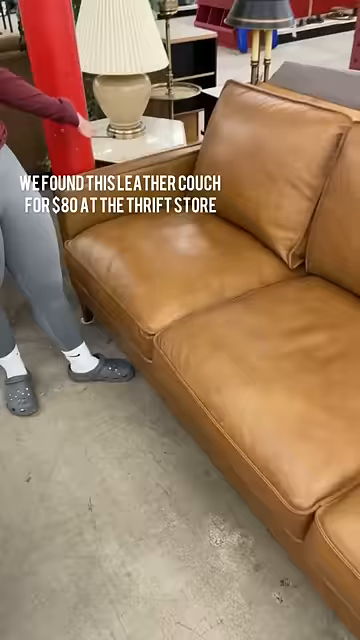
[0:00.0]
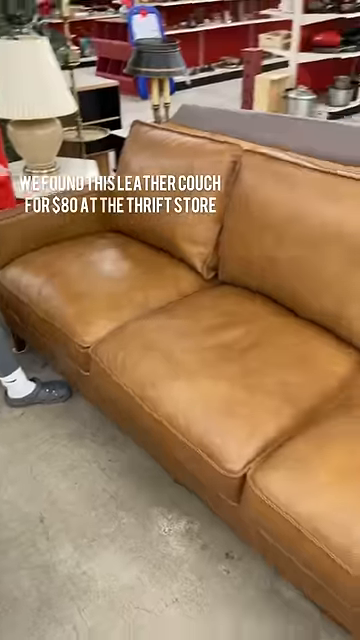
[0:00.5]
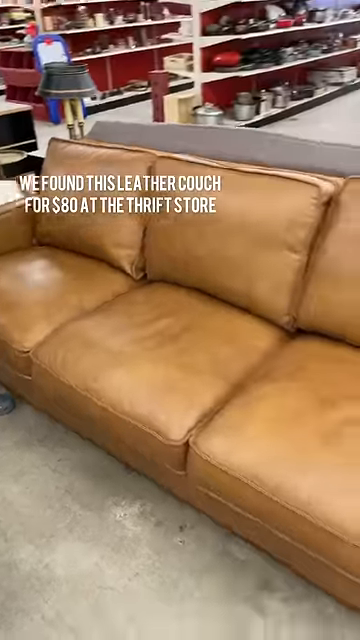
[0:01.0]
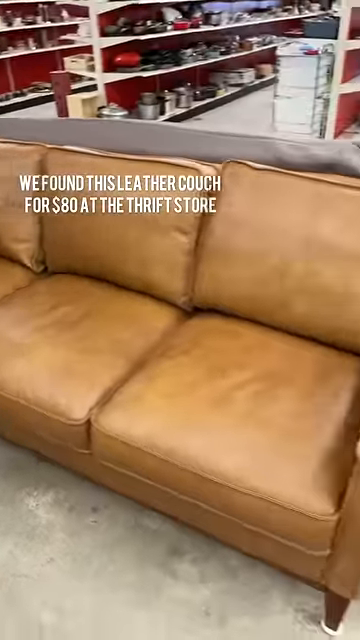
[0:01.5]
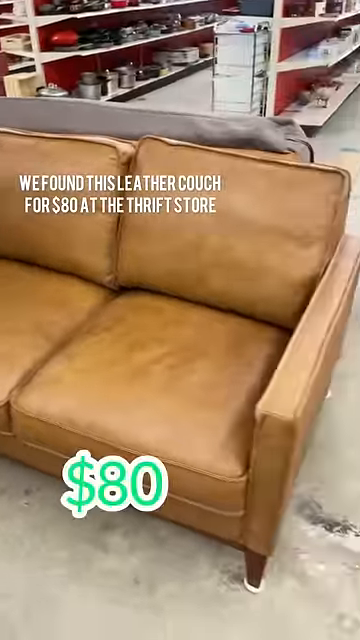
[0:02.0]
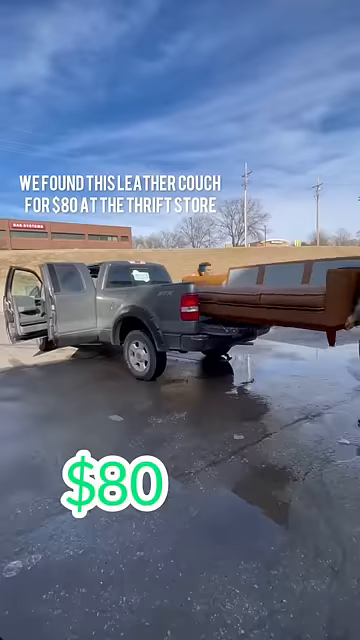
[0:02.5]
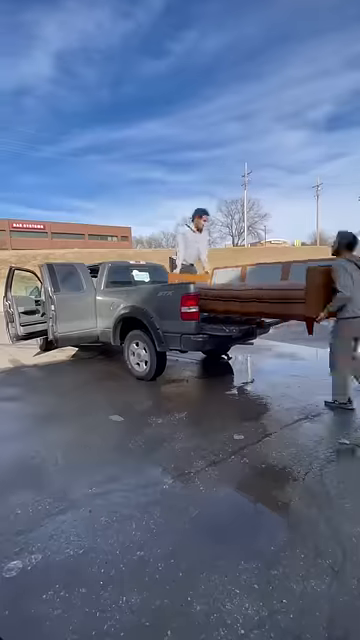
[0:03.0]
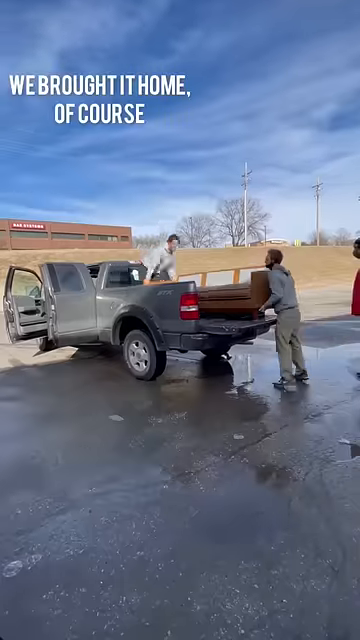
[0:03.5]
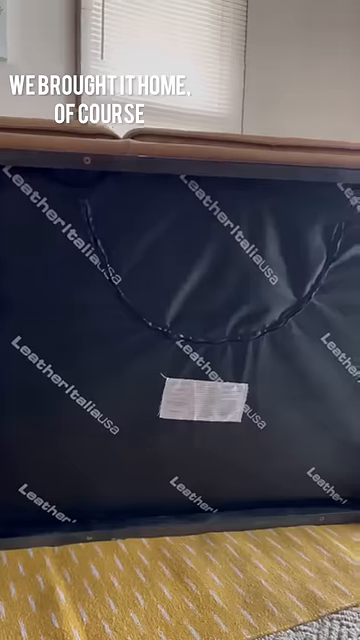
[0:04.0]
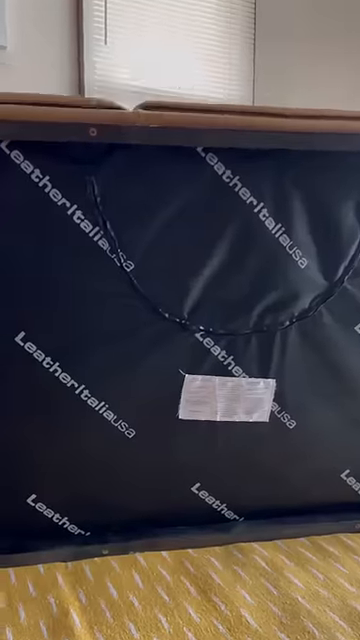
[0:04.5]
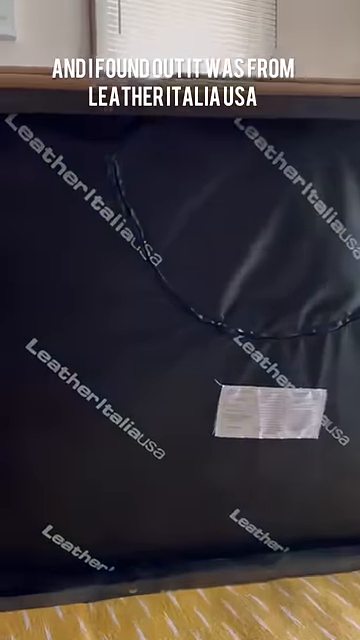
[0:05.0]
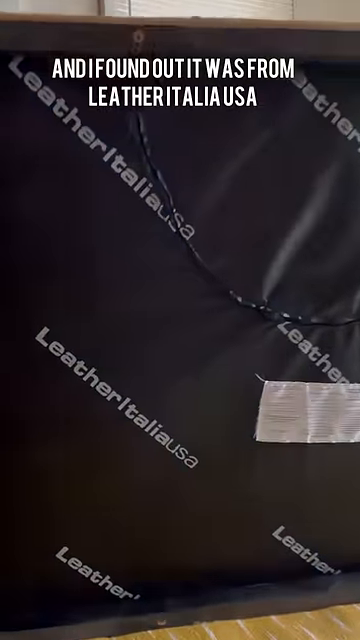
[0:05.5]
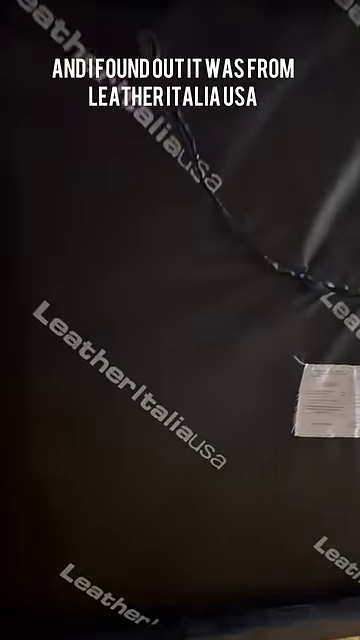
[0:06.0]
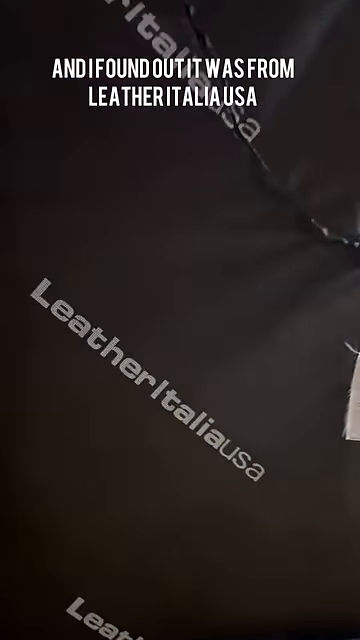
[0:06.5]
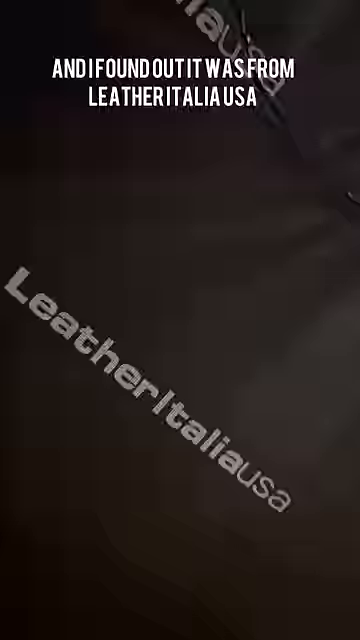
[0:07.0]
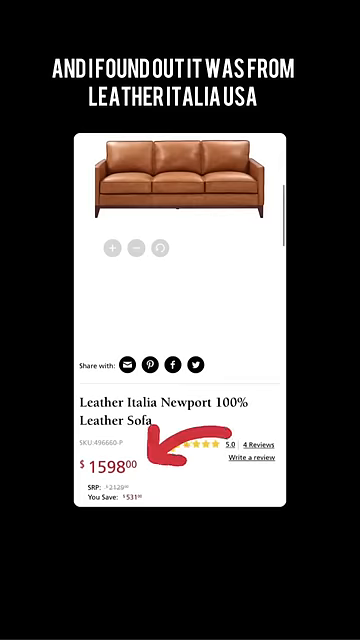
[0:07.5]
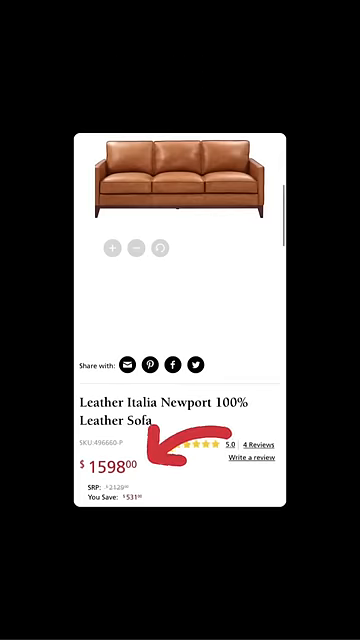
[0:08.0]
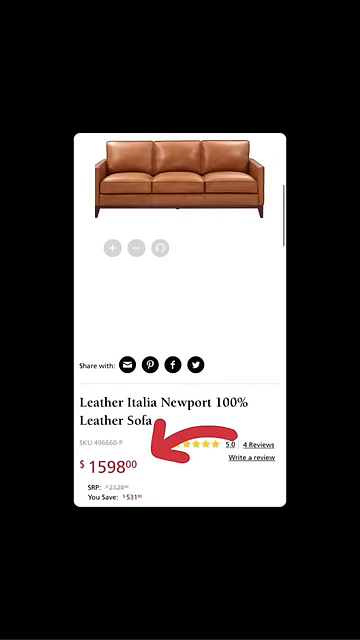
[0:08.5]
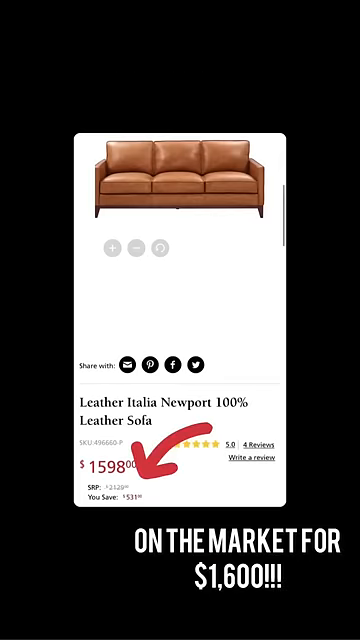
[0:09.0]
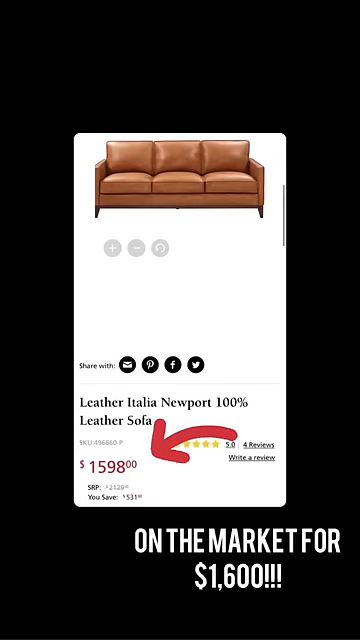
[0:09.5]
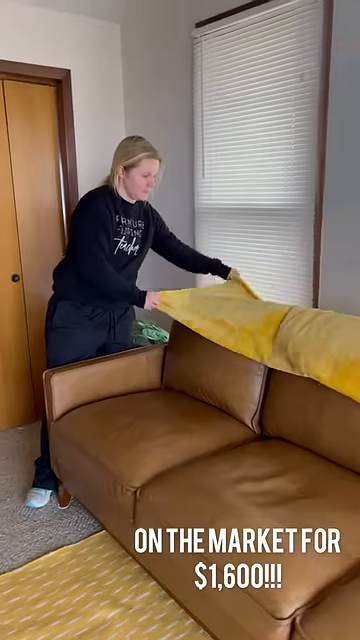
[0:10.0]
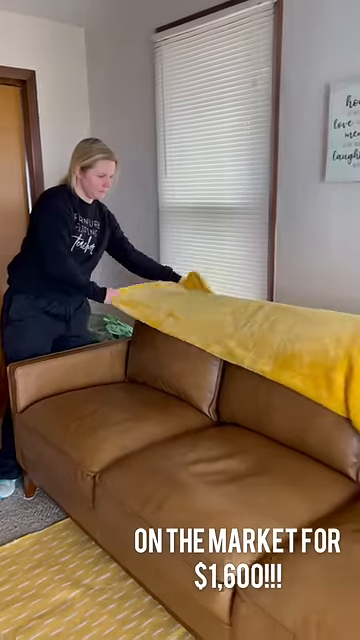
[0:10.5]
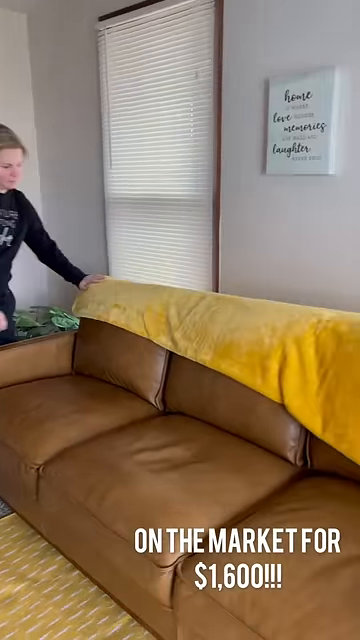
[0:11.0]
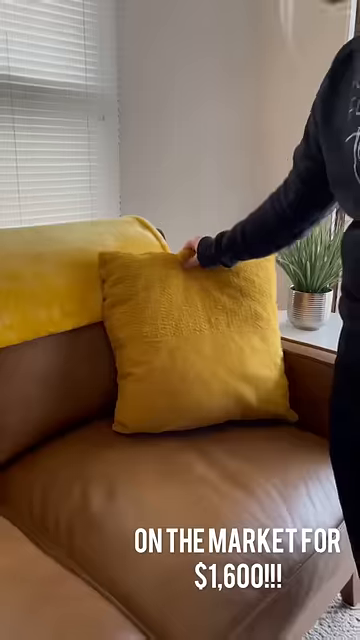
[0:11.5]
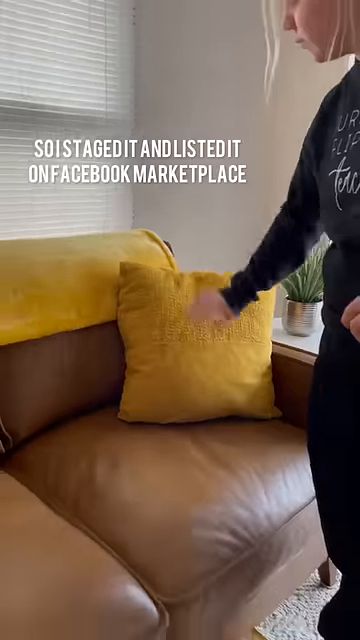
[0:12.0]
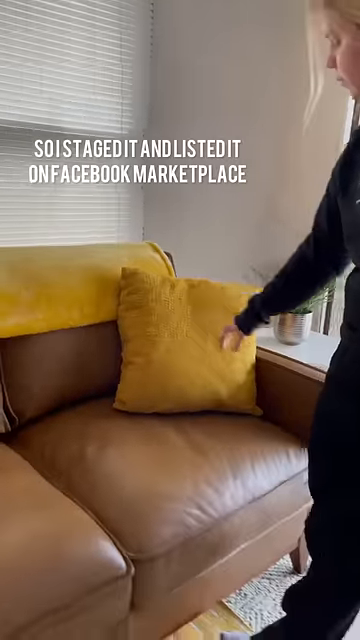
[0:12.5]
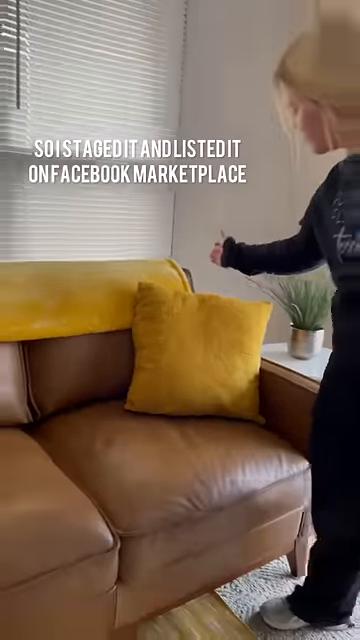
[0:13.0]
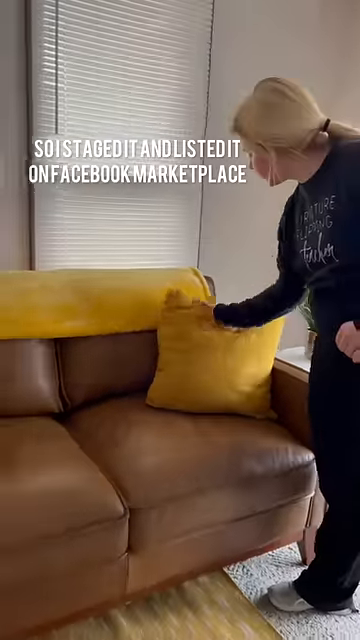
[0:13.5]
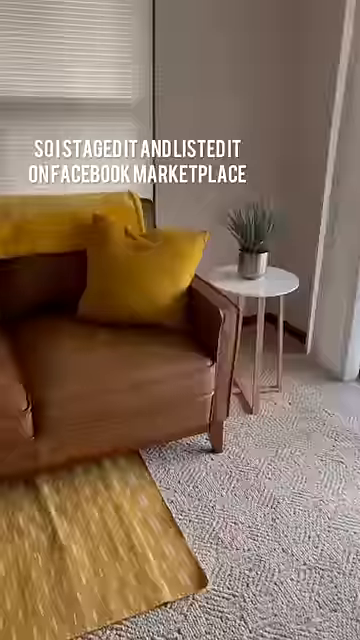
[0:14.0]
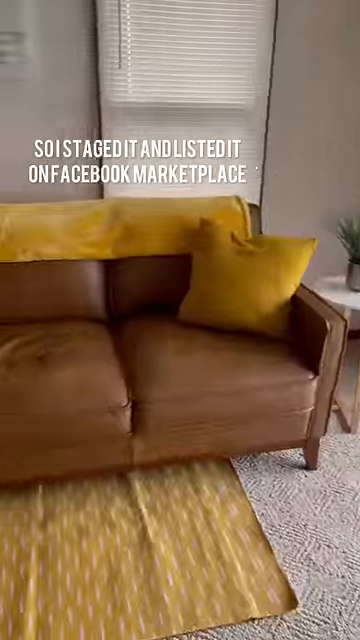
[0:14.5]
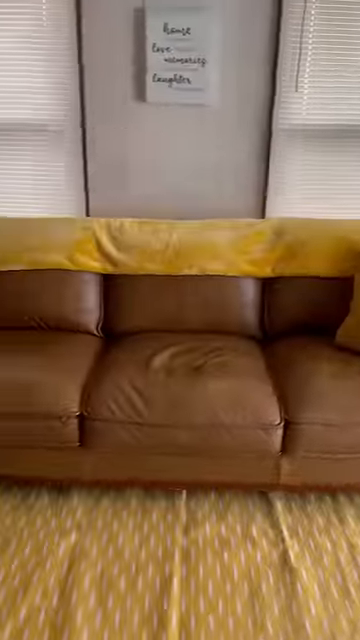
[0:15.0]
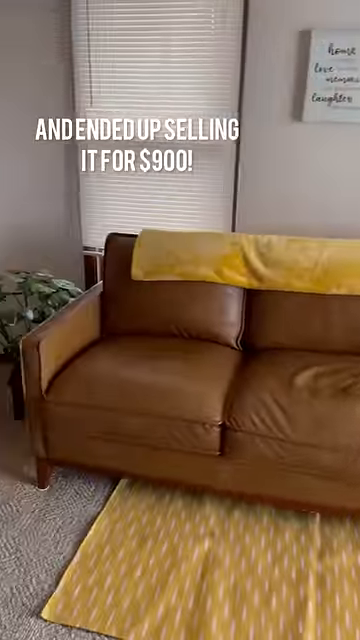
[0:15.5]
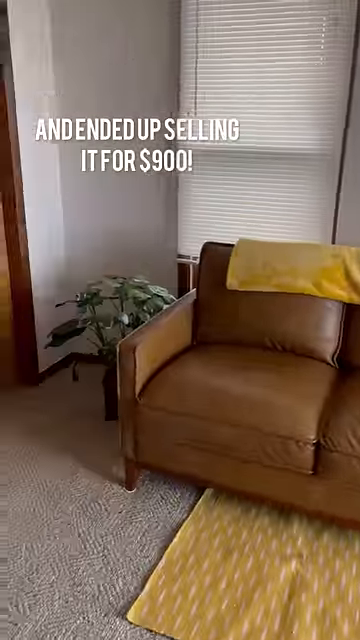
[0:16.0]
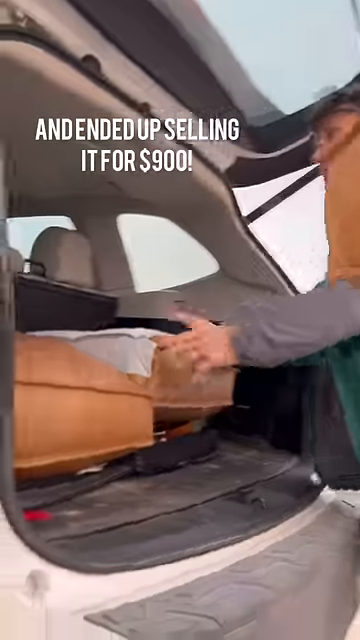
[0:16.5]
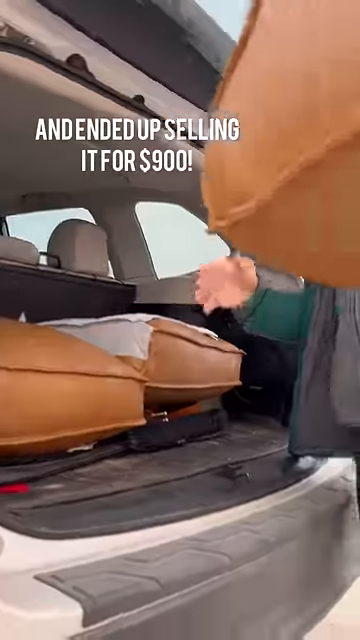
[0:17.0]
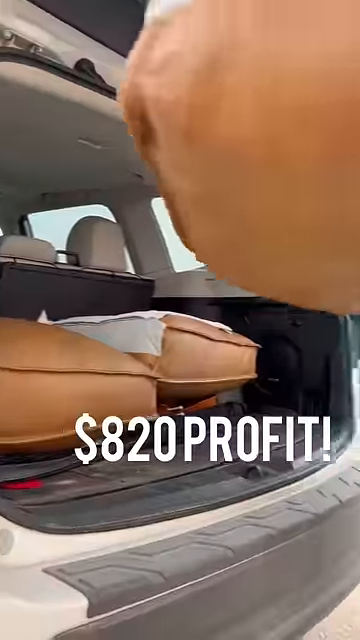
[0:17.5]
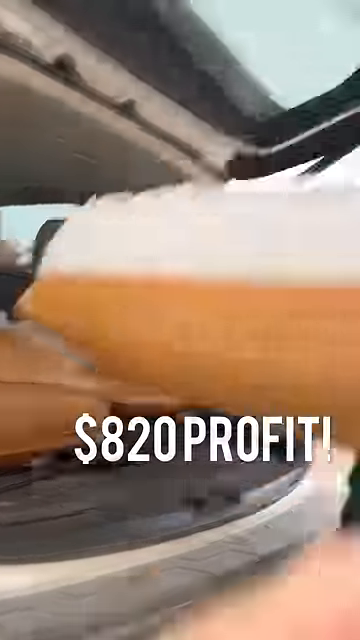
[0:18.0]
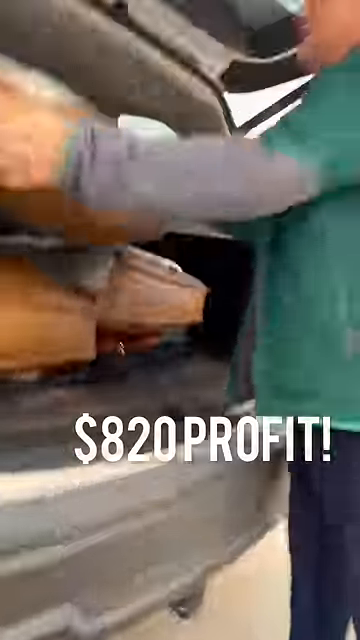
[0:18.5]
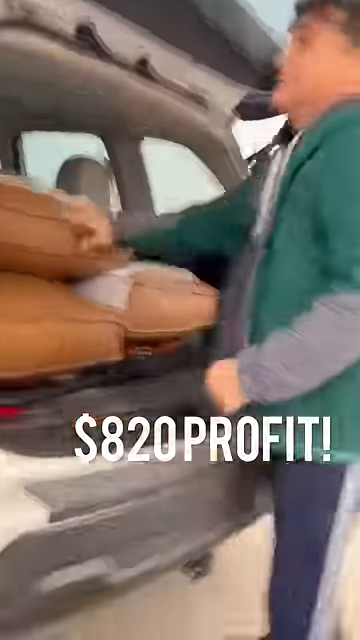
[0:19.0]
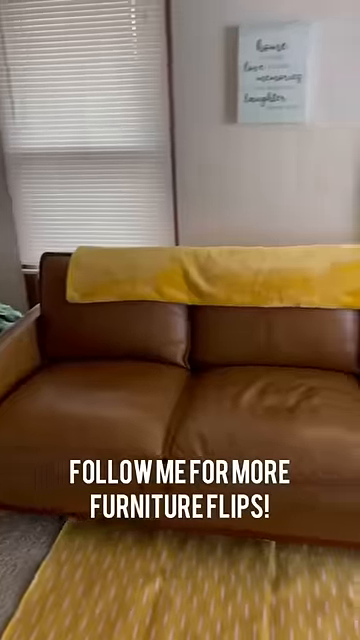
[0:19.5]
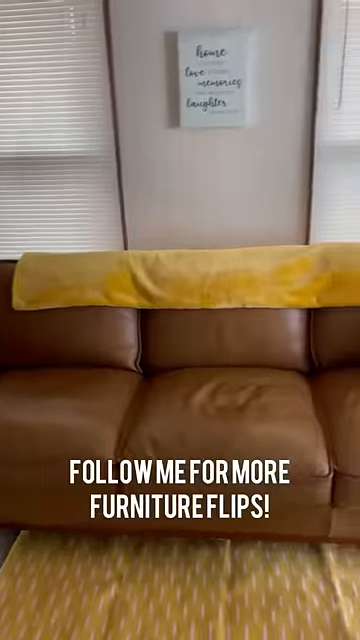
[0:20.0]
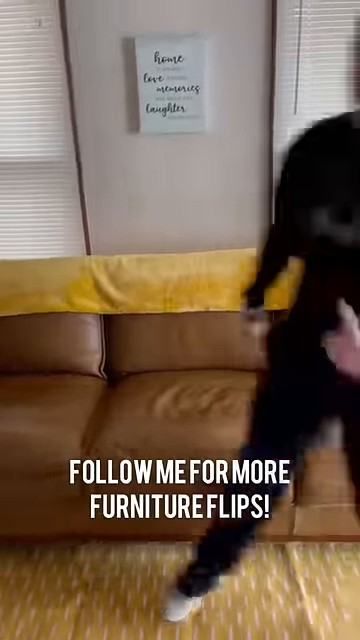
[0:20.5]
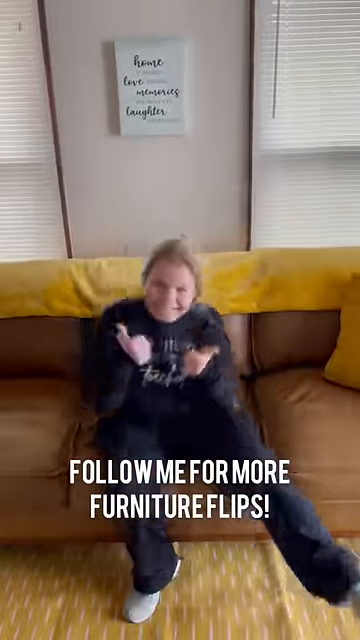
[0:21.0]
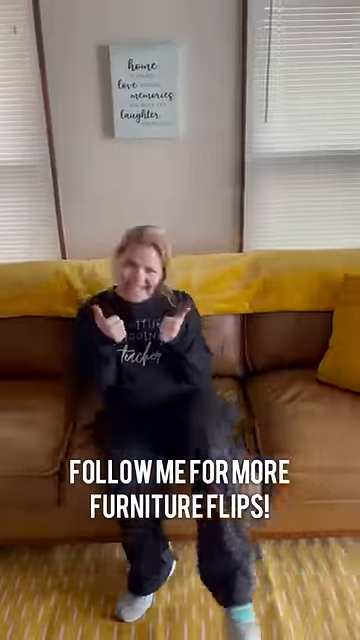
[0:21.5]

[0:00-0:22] Text on this YouTube video reads "bought for $80, sold for $900." The opening screen shows a living room with a window with blinds, a brown closet door, and a brown leather sofa with a white area rug under it. A woman wearing all black is standing at one end of the sofa. She shows herself putting a sofa in the back of a pickup truck, and she shows a picture of that sofa listed online for $1,500. She spent $80 on it; she shows how she found it in a thrift store and brought it home. She shows an ad for it online. She puts a yellow blanket over the sofa and a yellow pillow on it. Later, someone is shown putting it into a car, and she says she made $820 profit from it. Markings on the back of the sofa show it is from Leather Italia USA.